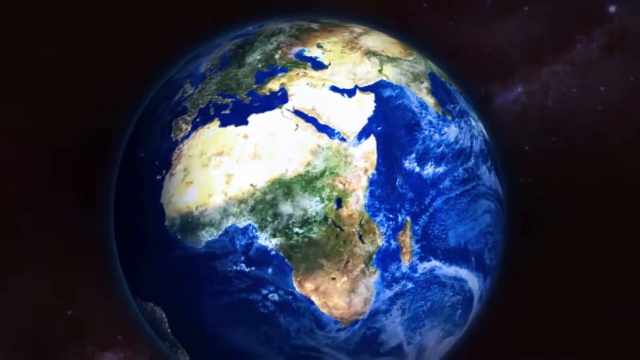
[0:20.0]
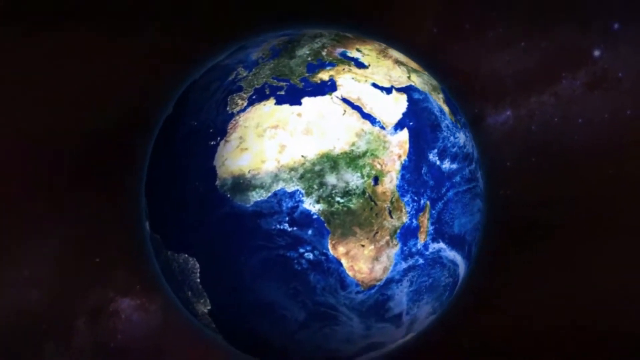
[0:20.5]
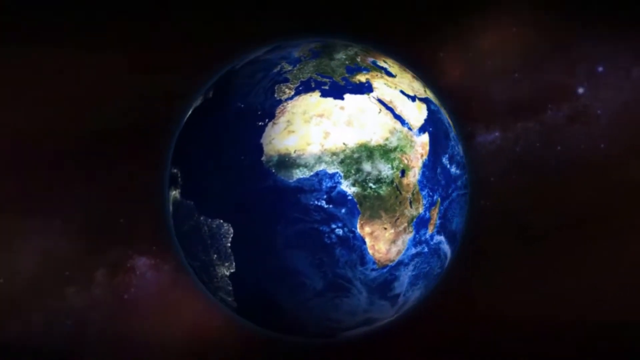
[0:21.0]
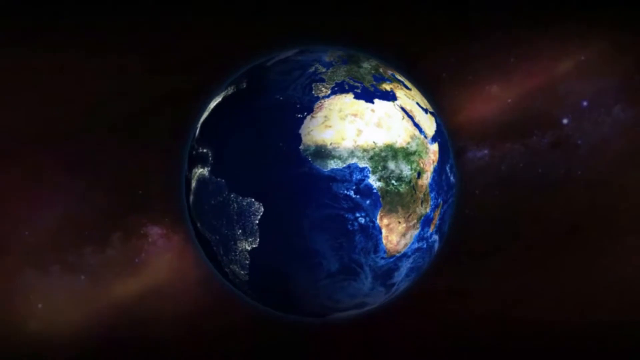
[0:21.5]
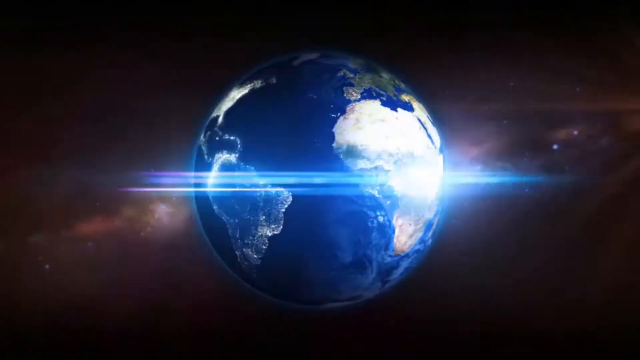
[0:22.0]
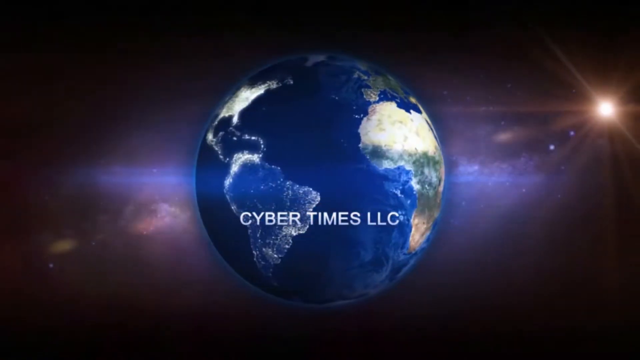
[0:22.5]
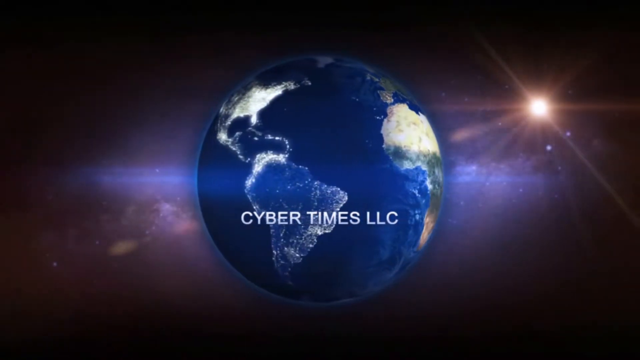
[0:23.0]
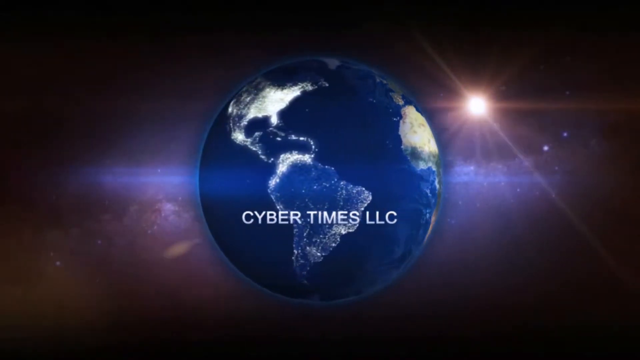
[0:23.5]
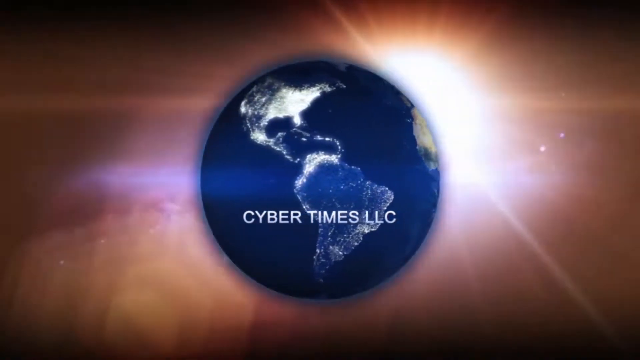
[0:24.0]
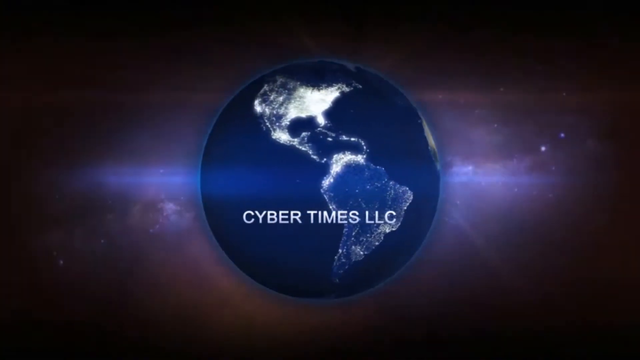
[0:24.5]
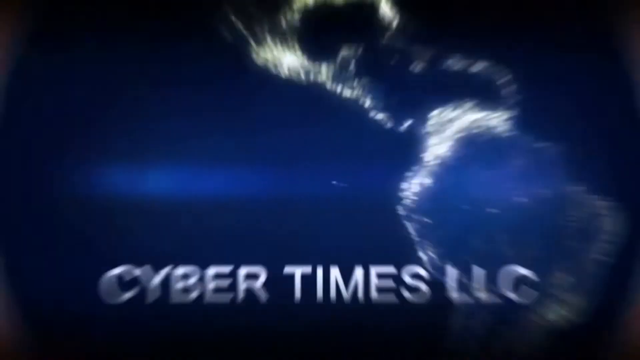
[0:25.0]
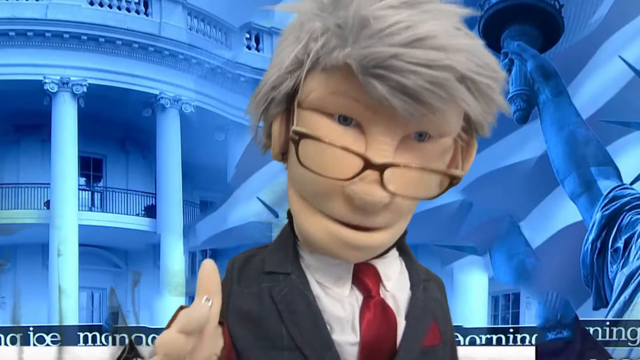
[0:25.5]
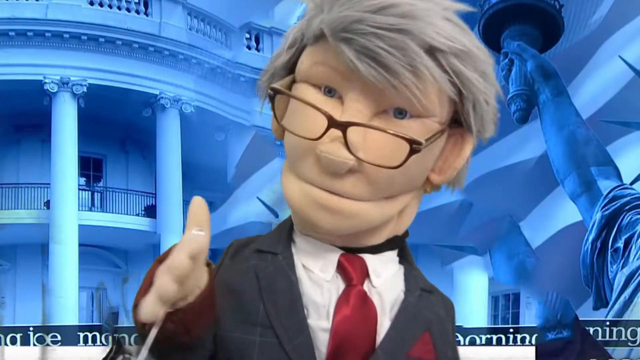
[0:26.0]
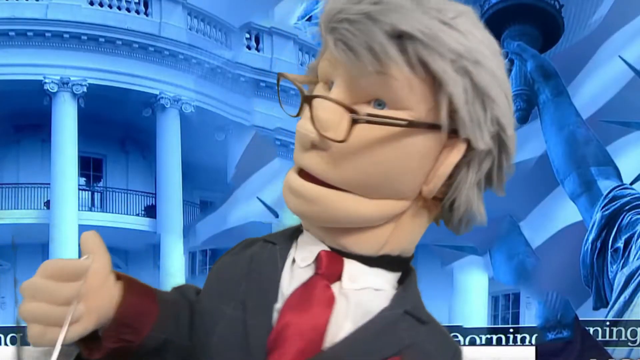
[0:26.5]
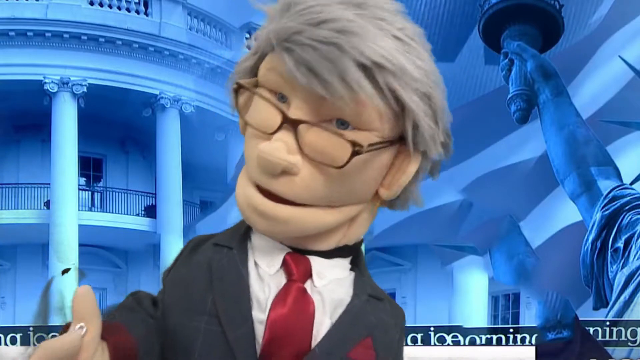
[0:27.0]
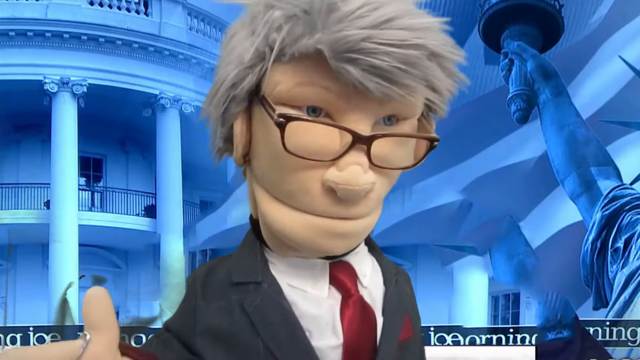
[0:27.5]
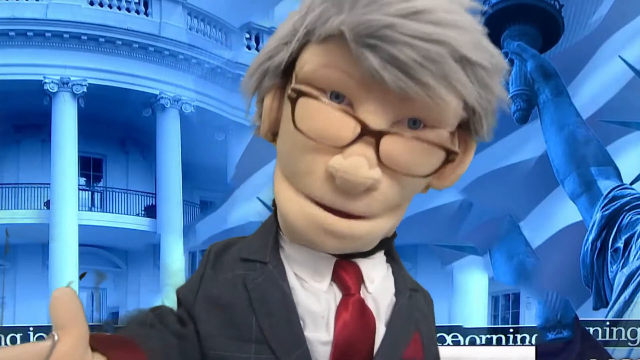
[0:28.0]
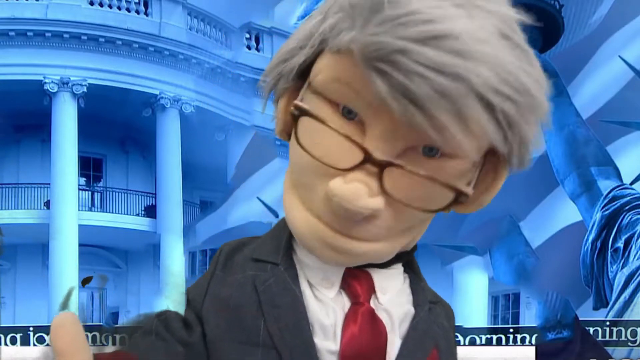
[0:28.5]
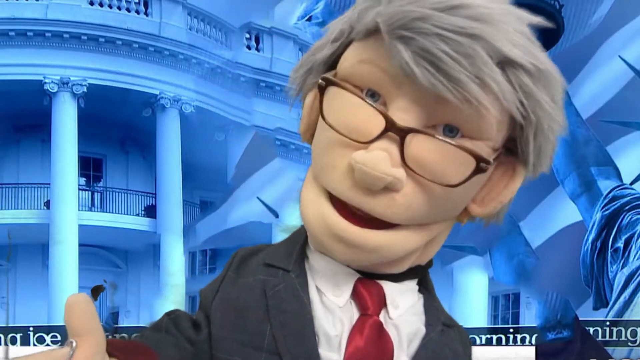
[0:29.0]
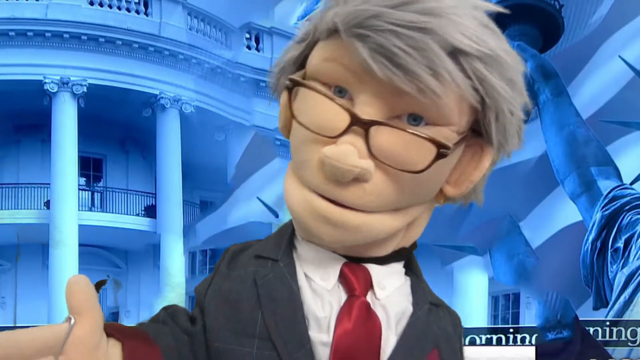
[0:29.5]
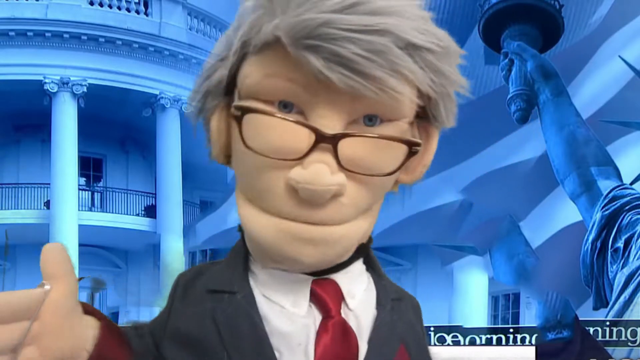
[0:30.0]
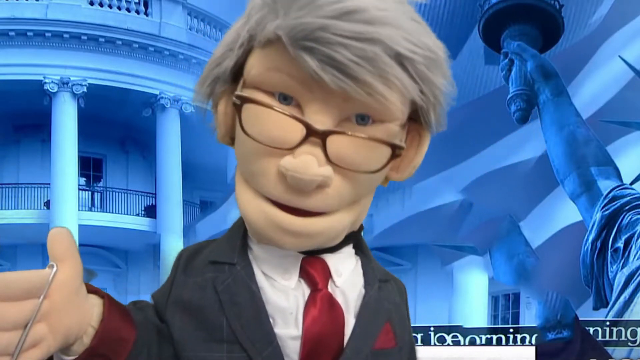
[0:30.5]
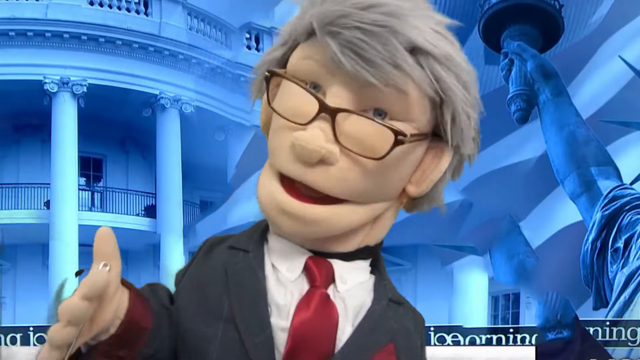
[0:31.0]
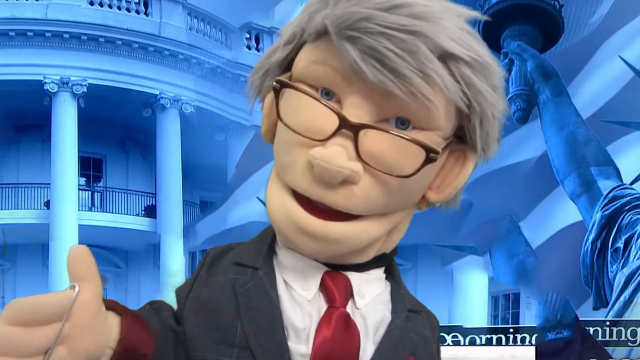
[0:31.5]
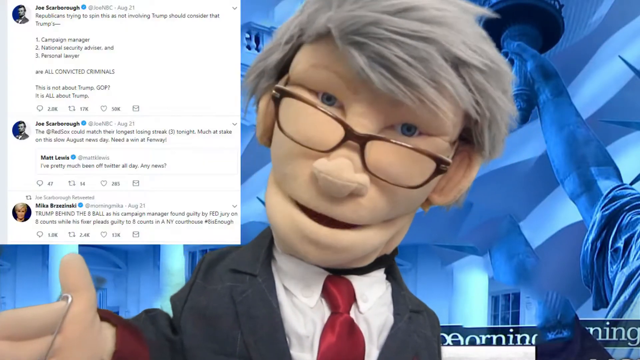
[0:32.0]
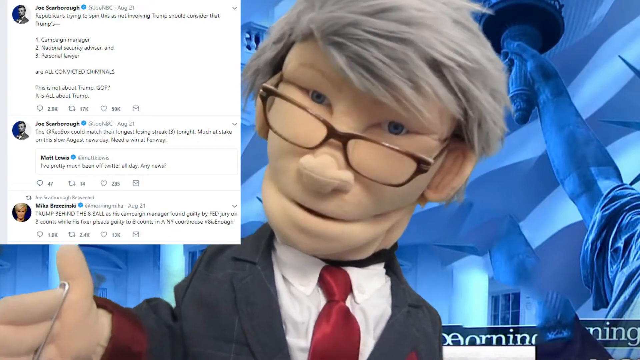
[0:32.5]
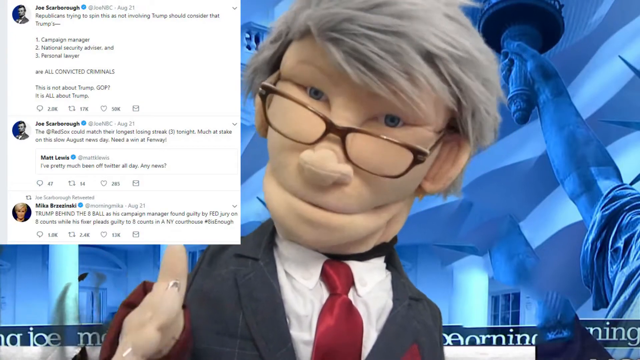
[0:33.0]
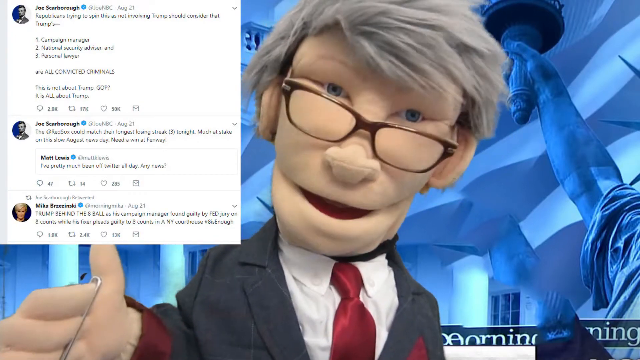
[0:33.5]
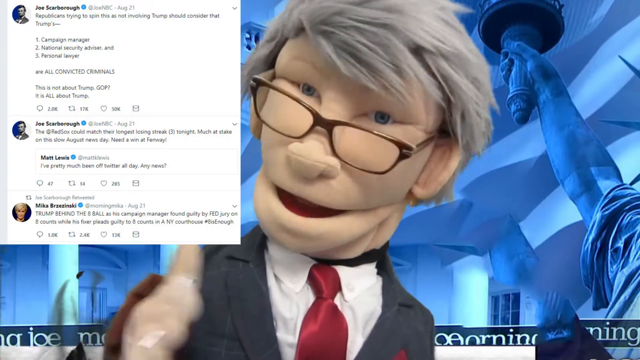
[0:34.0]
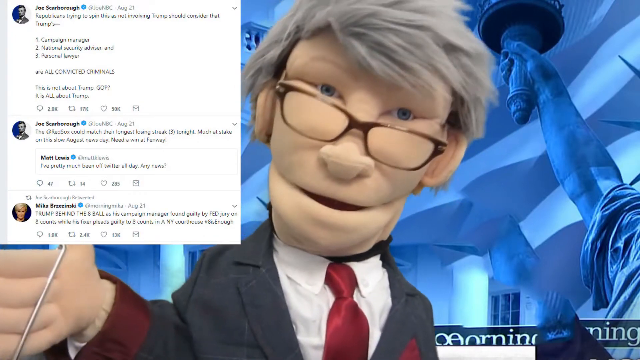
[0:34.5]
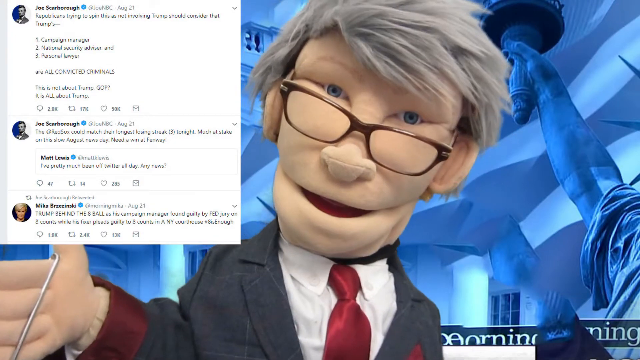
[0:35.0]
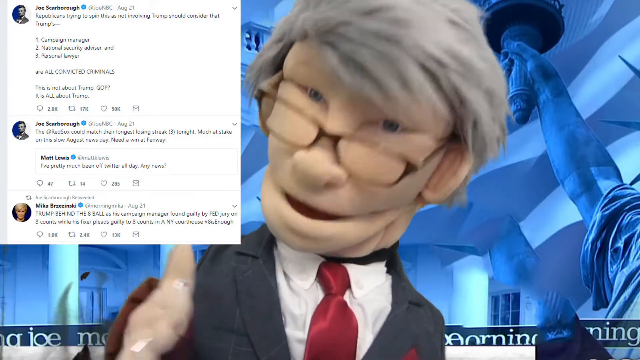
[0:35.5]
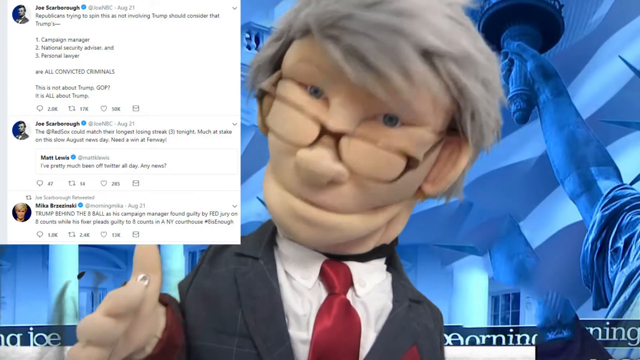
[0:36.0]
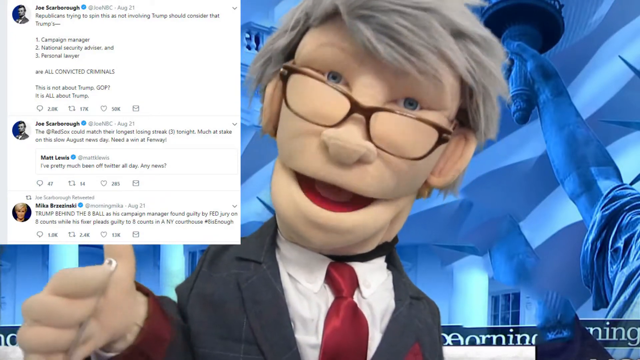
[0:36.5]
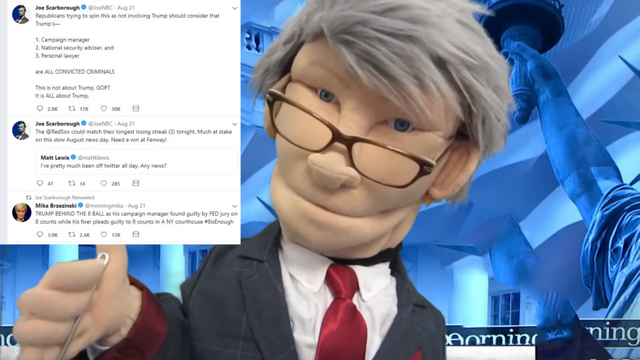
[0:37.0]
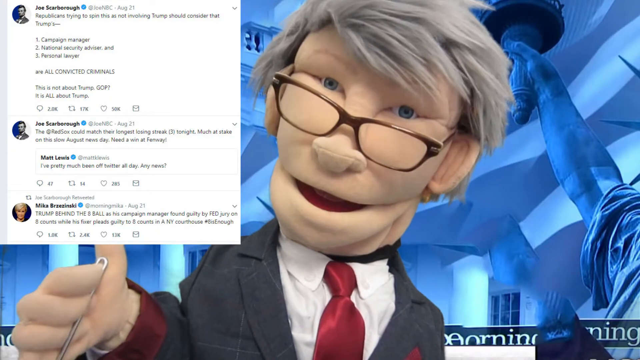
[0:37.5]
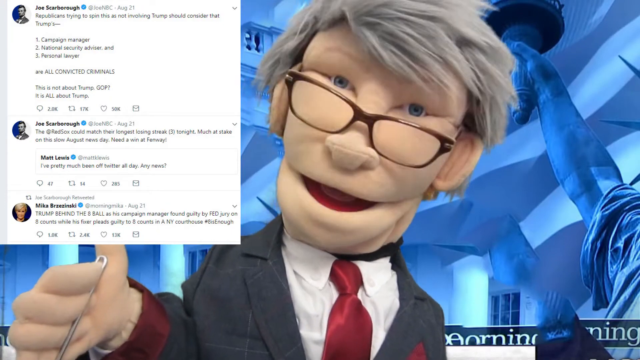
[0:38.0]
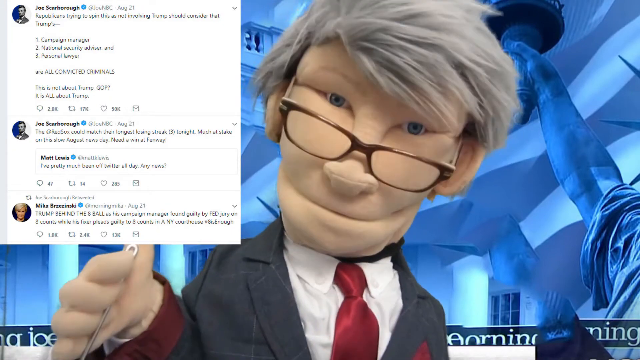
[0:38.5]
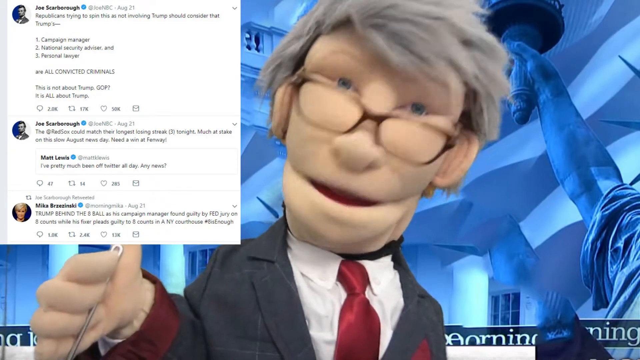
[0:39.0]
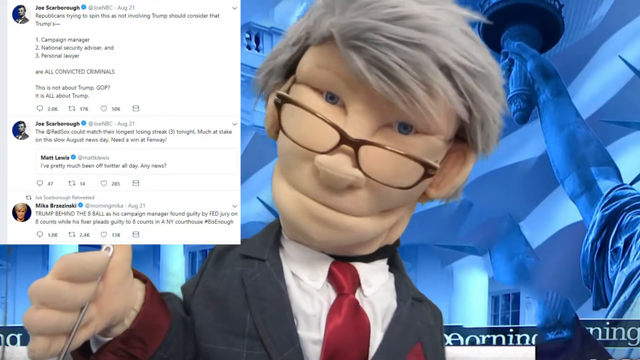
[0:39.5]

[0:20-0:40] The globe continues spinning on its axis, with text that includes the word "hypertonic" at the top of it. It quickly changes to a Muppet talking directly to the screen. This Muppet has green hair, glasses, a red tie and a suit, and talks very seriously while comments from the internet appear on the screen. The background is a light blue shade of the American flag with the Statue of Liberty.